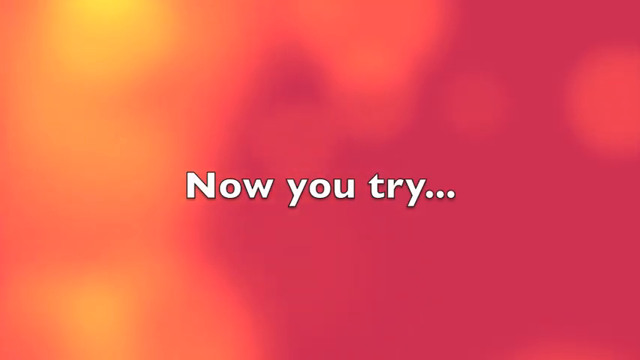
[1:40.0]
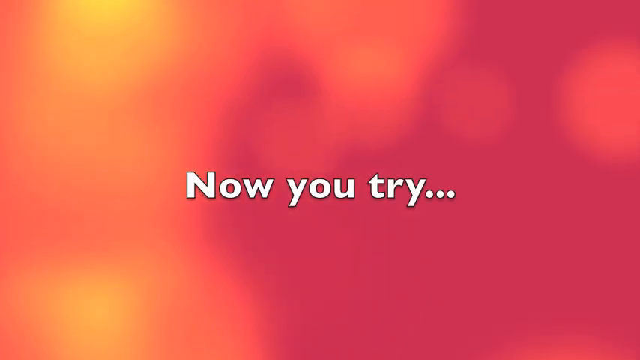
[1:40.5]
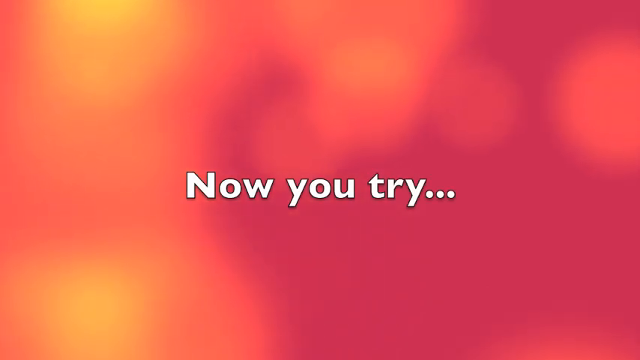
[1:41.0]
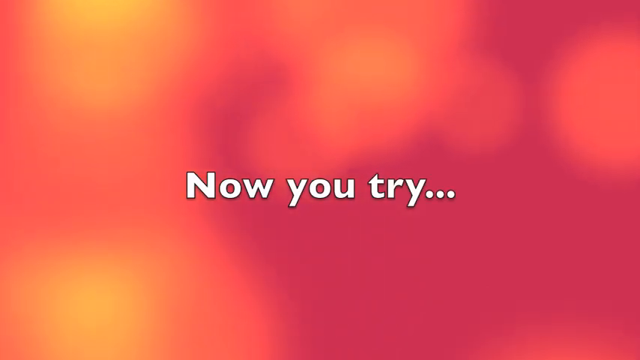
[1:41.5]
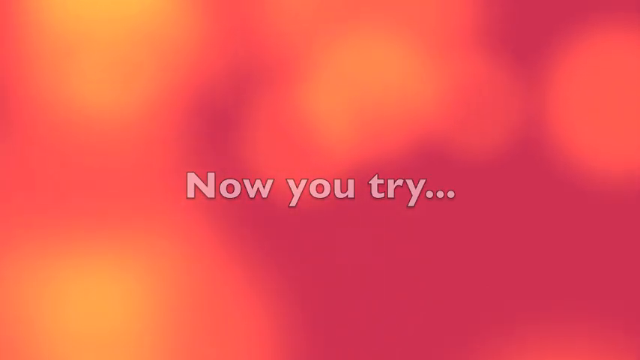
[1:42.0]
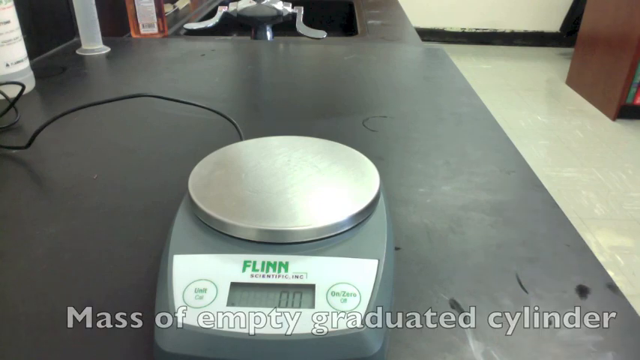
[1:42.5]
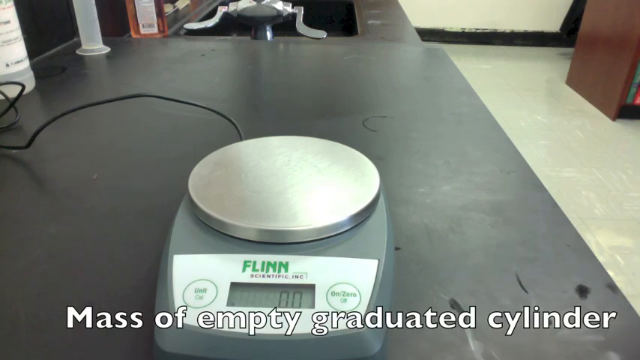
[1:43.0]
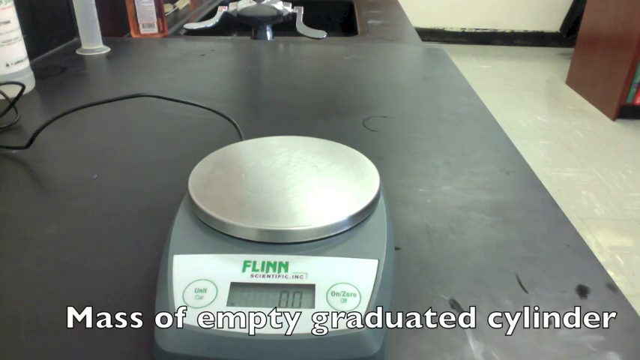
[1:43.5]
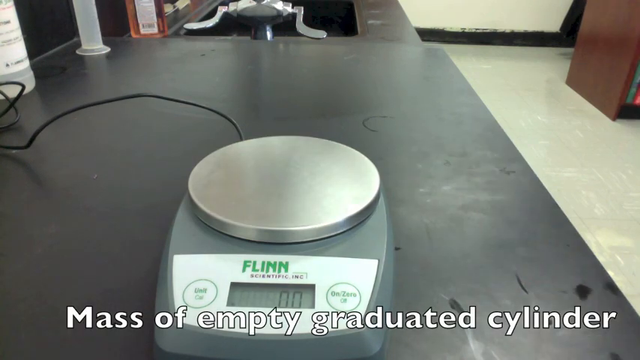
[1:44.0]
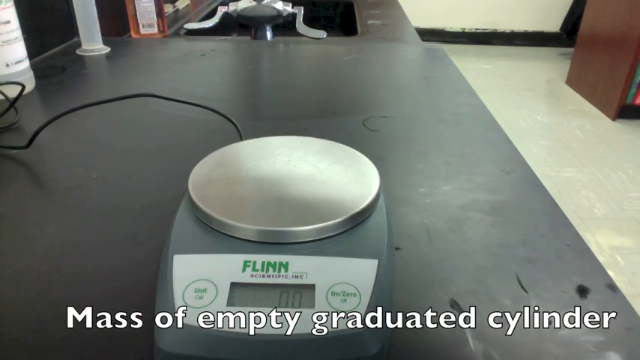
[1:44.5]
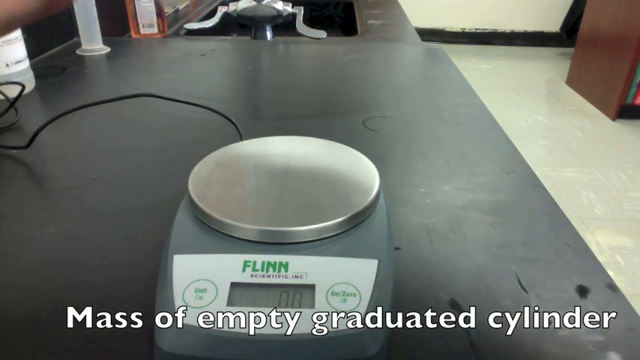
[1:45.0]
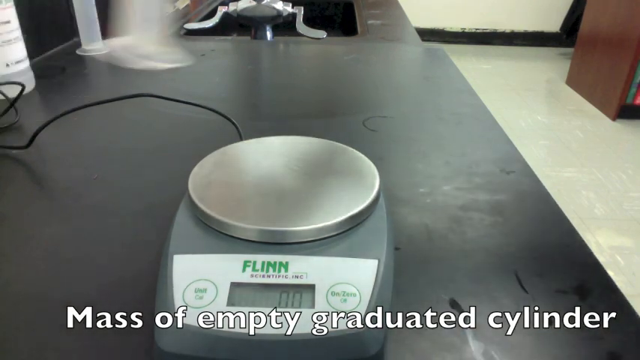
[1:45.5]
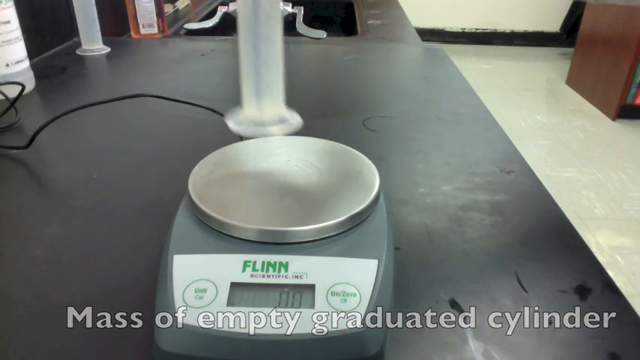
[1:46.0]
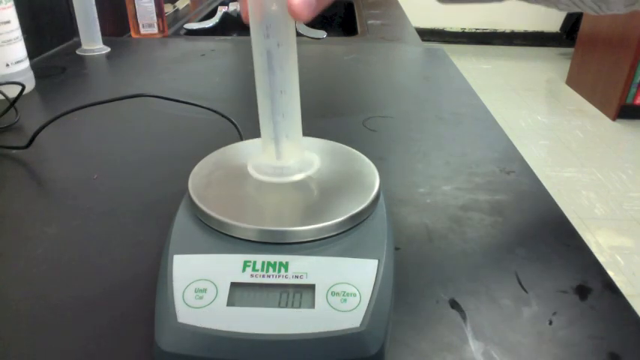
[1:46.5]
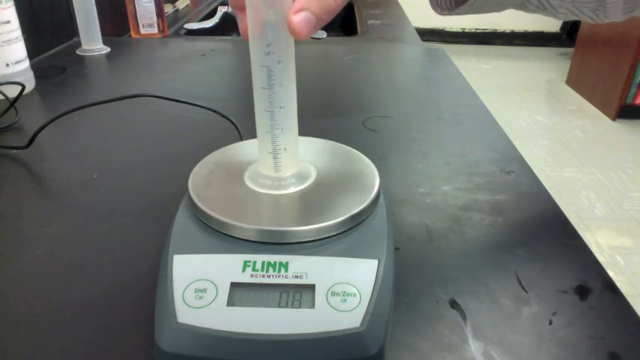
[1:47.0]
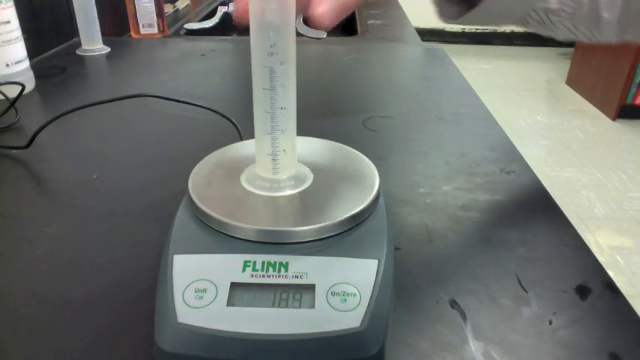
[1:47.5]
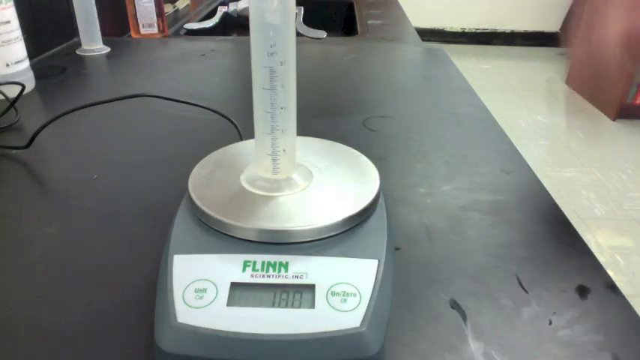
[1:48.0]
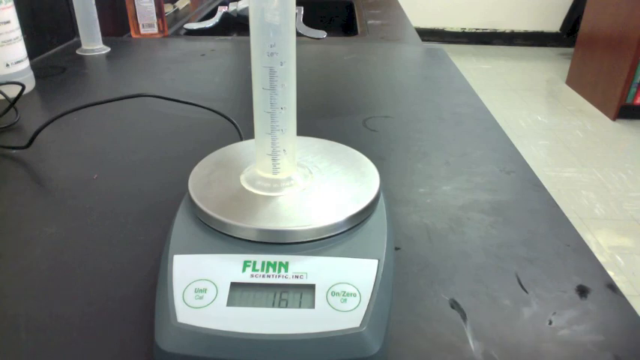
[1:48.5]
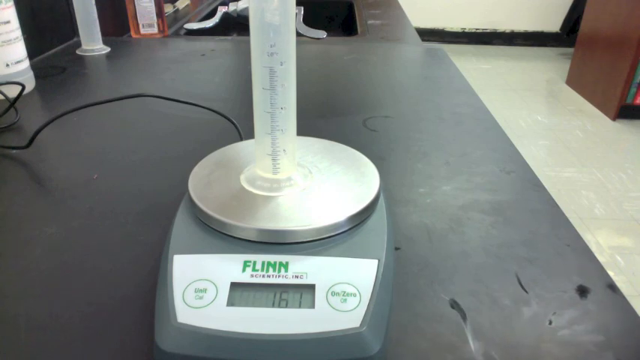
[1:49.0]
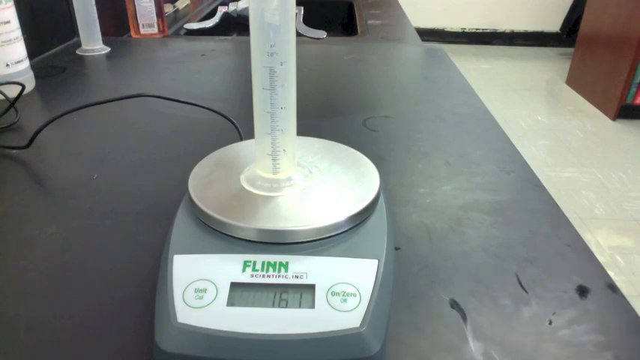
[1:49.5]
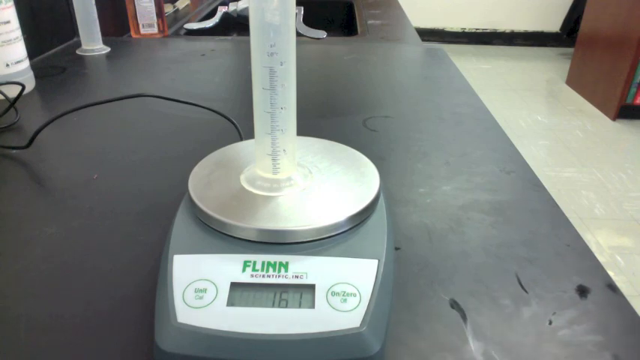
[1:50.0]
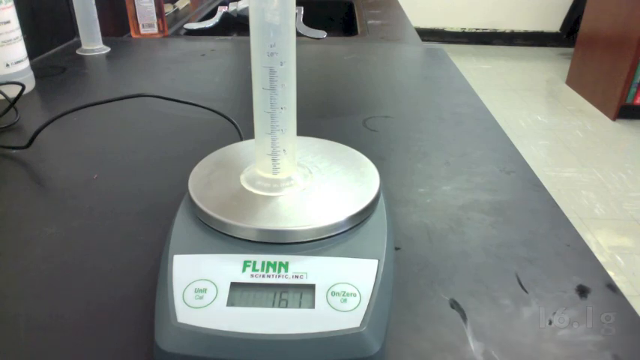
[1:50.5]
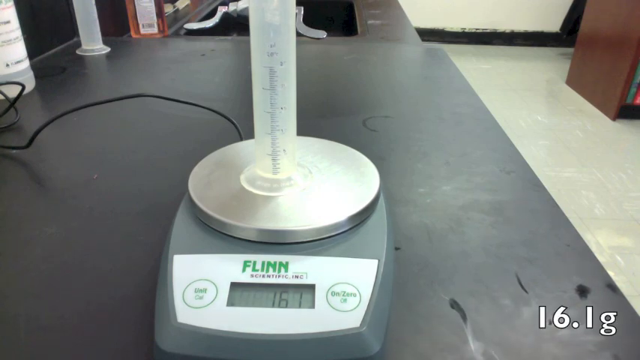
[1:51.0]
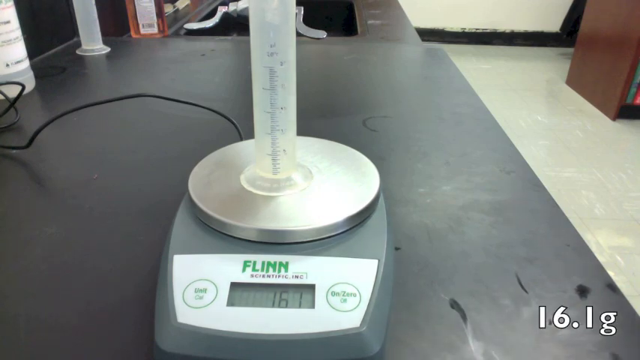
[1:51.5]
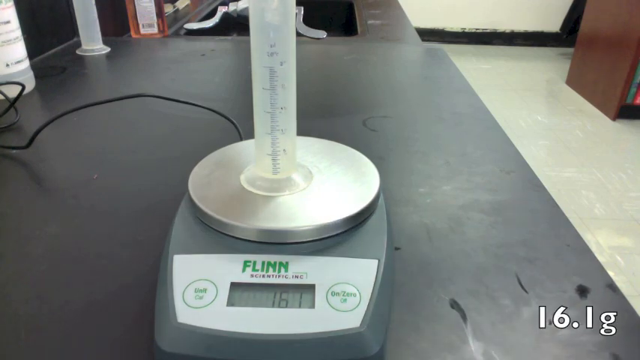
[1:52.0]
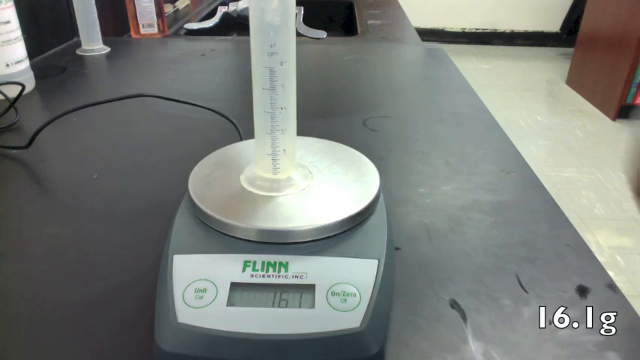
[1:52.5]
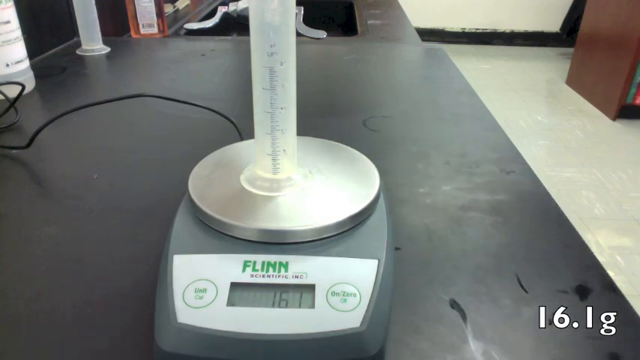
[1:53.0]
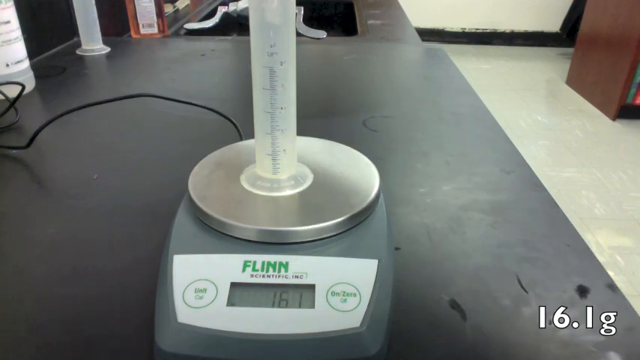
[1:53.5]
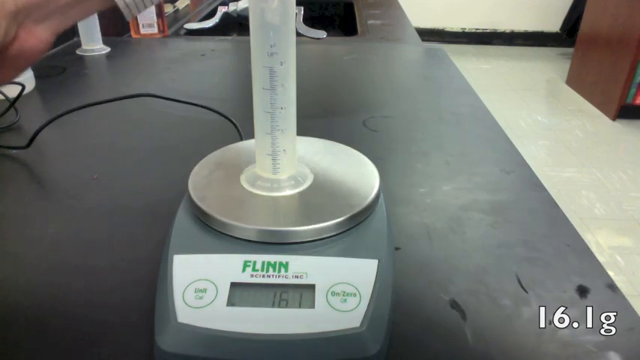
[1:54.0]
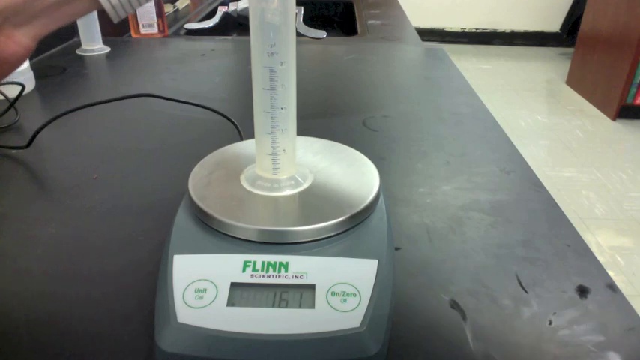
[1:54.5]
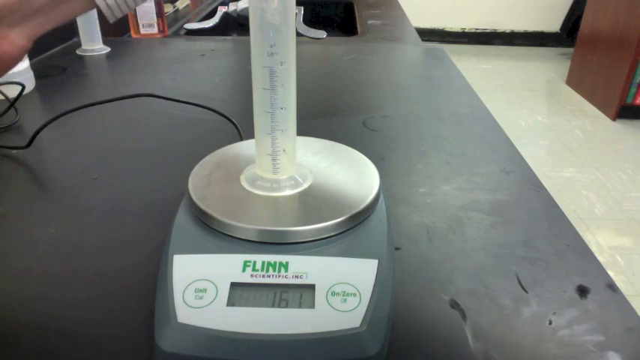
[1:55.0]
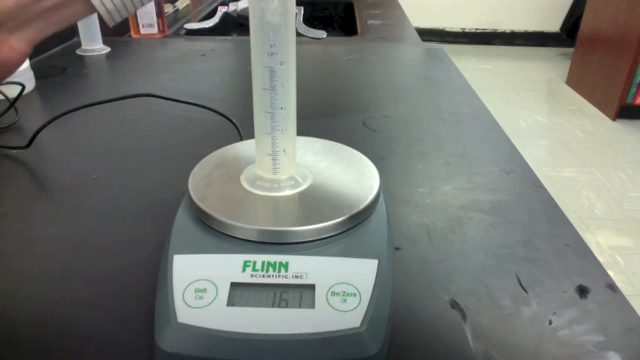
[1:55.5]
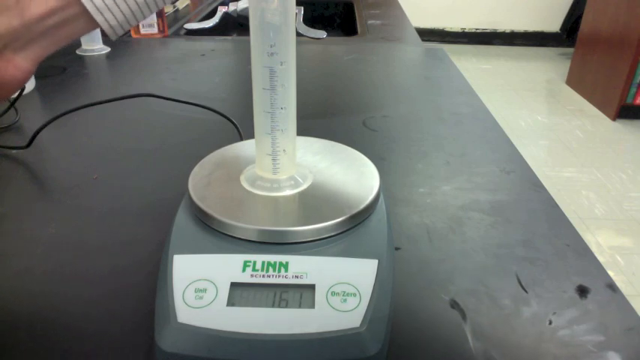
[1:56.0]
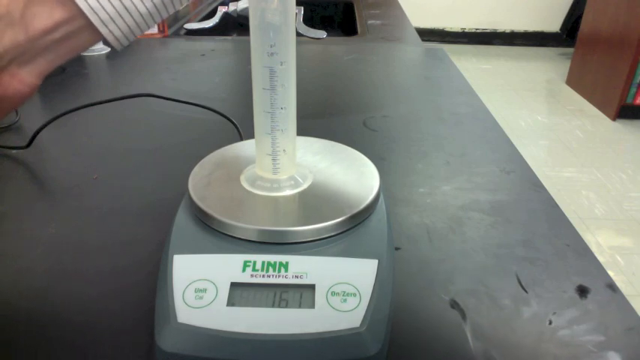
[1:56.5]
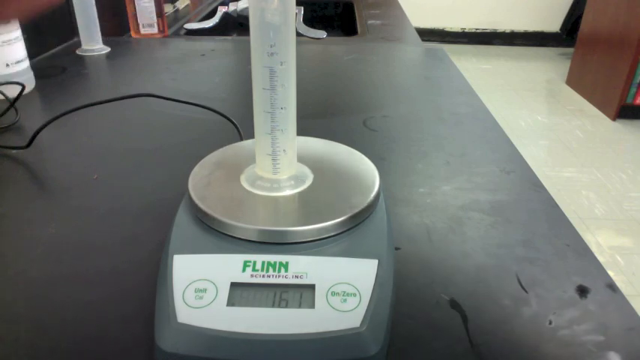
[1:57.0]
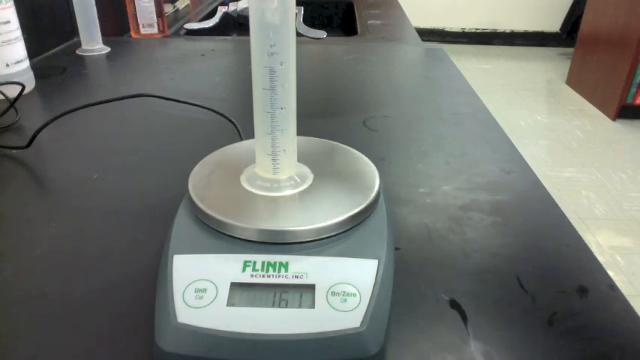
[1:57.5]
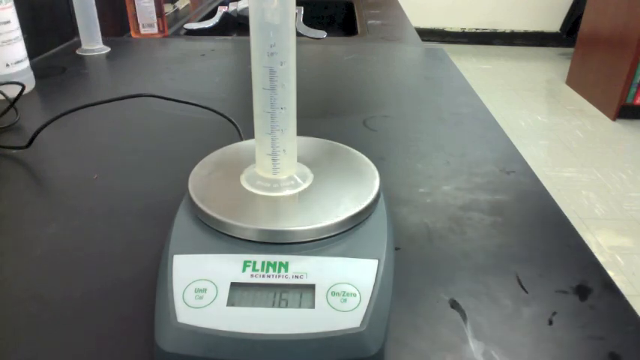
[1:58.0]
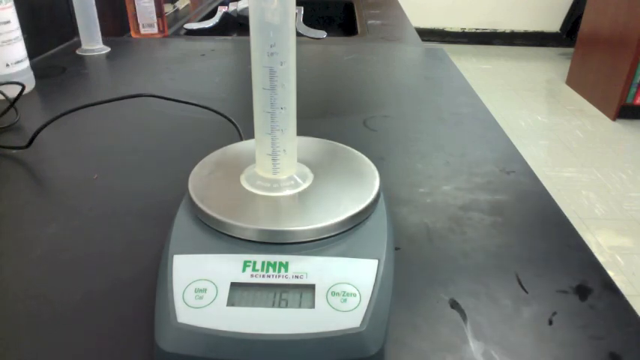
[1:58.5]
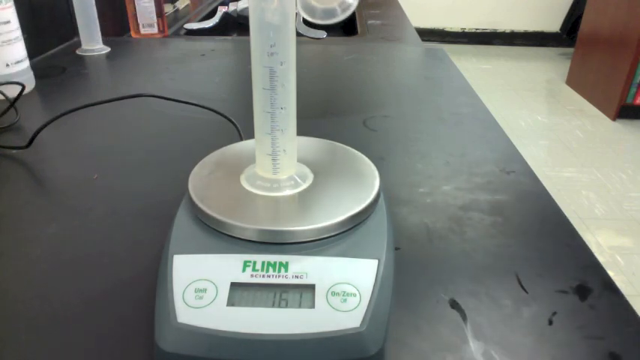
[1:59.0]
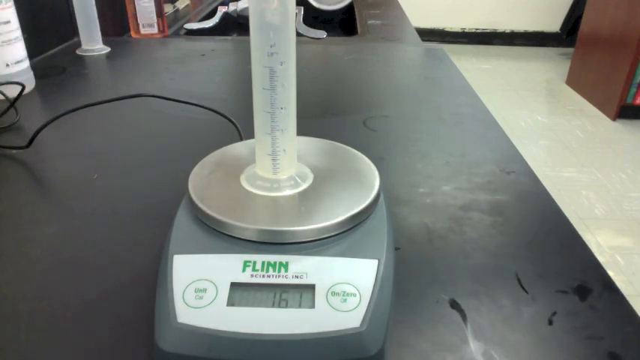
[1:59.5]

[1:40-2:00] A home screen that is red, orange and yellow shows "now you try..." in white letters in the middle. Then a scale on a black table is shown on the right side of the screen, with white tile visible at the bottom of the screen. Text reads "mass of empty graduated cylinder". The cylinder beaker is put on the scale, which shows 16.1, and "16.1 G" appears at the bottom right of the screen. A person's right arm, the arm doing all of this, reaches over; there is a white sleeve over it. The video goes back to the home screen reading "now you try...". The bottle that was in the back is now on the left side, in the top left corner of the screen, and the beaker is above it at the top of the screen.